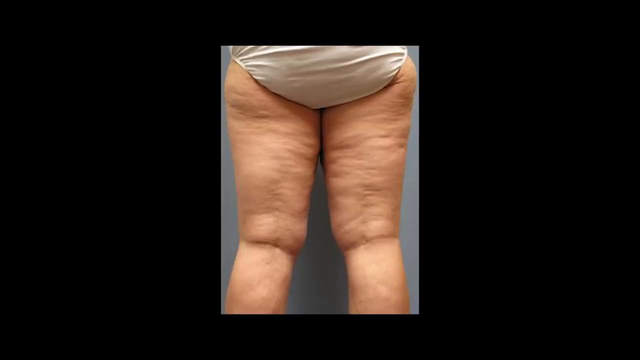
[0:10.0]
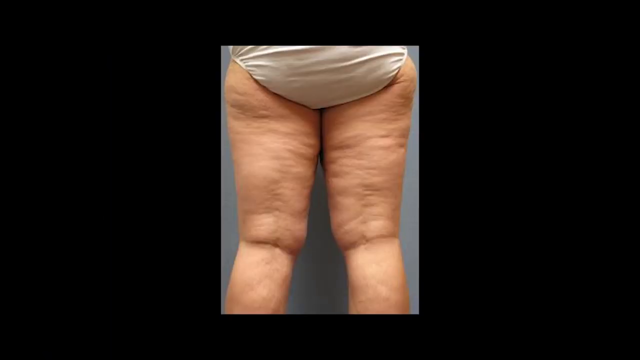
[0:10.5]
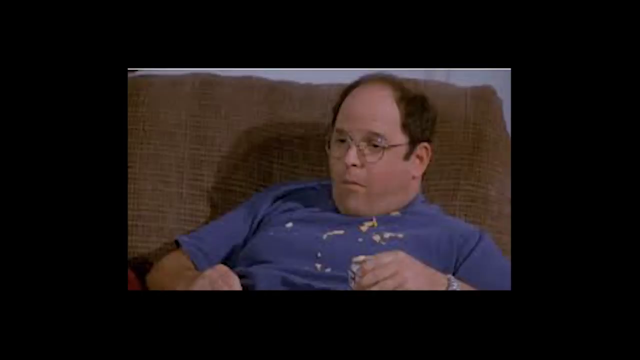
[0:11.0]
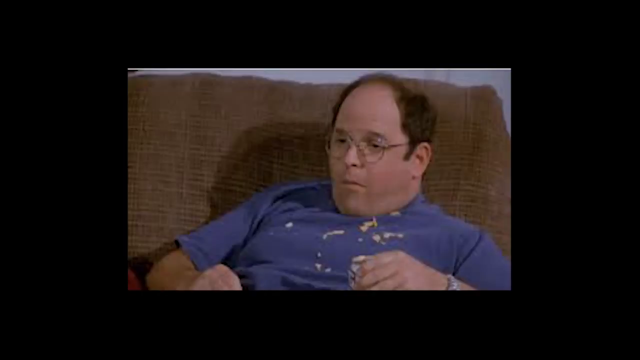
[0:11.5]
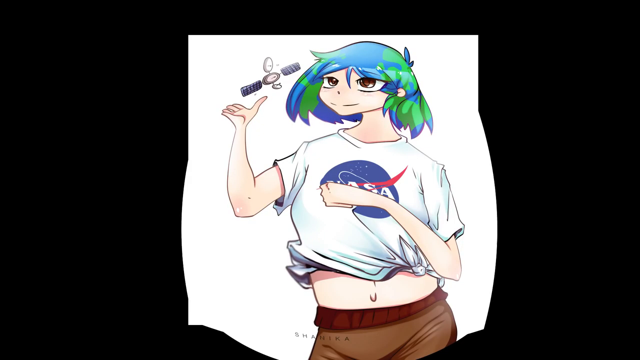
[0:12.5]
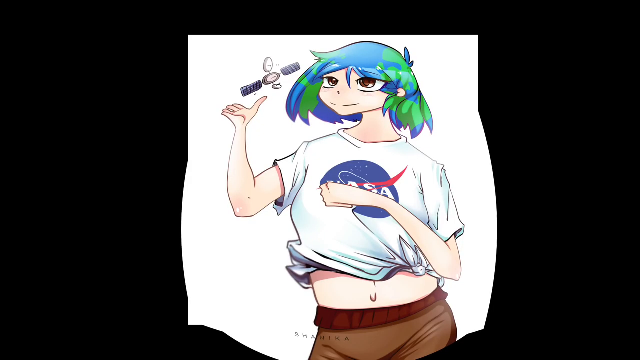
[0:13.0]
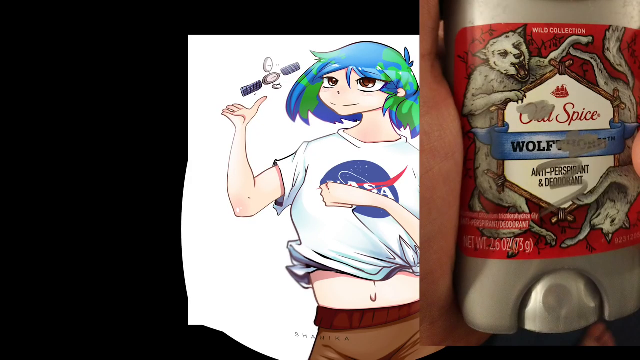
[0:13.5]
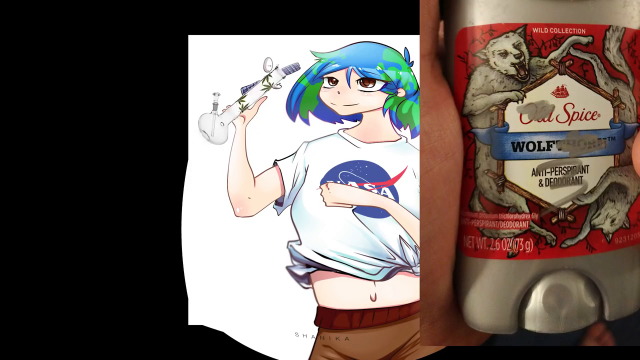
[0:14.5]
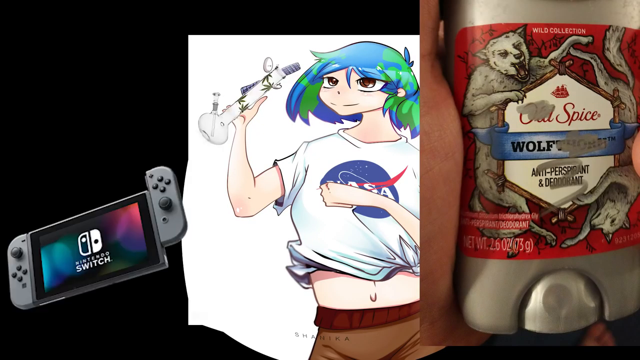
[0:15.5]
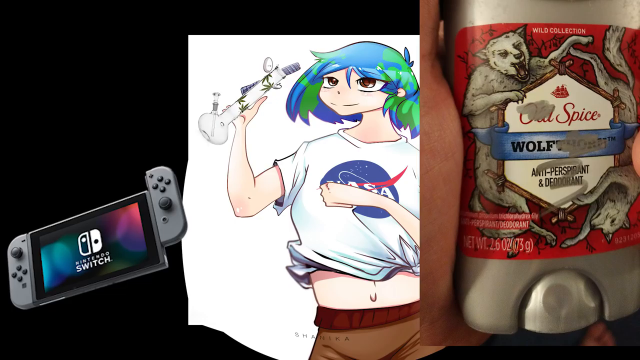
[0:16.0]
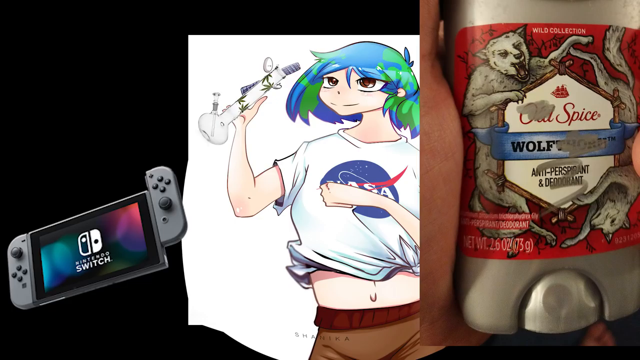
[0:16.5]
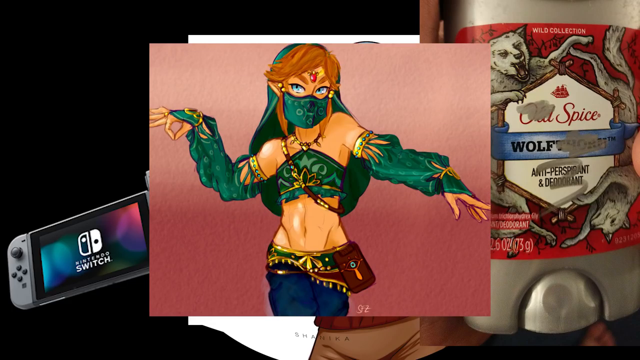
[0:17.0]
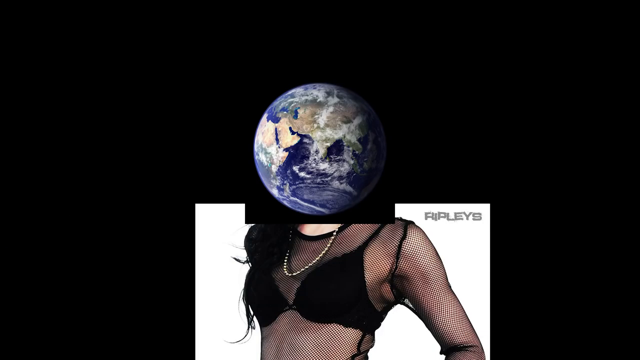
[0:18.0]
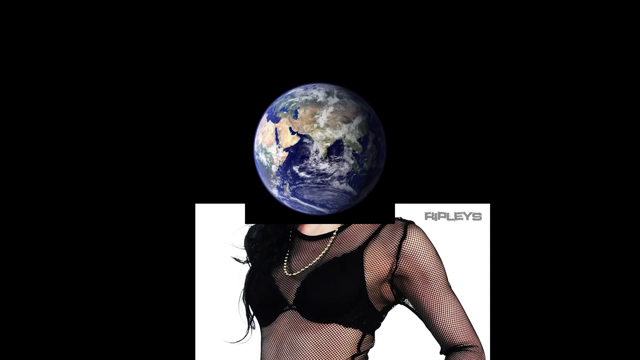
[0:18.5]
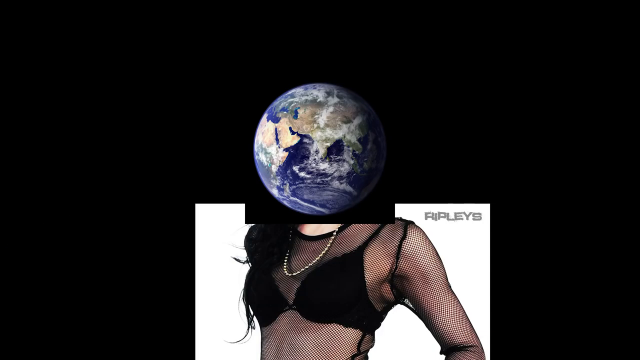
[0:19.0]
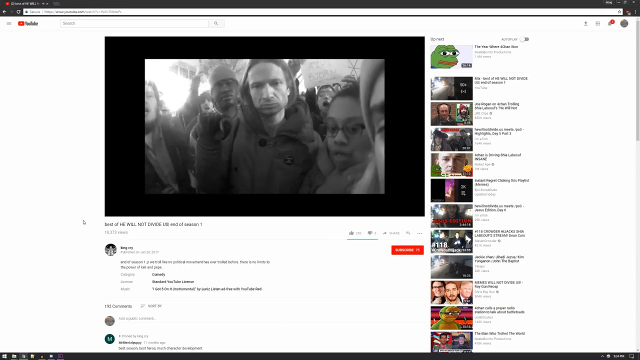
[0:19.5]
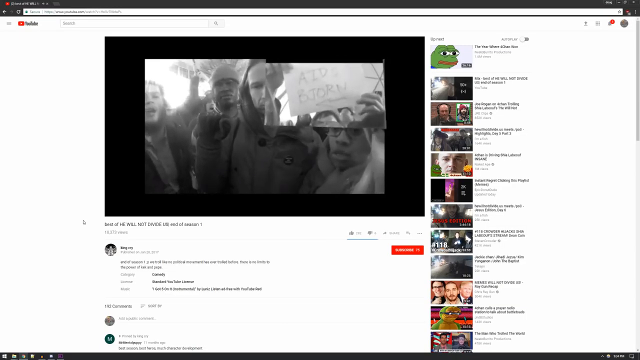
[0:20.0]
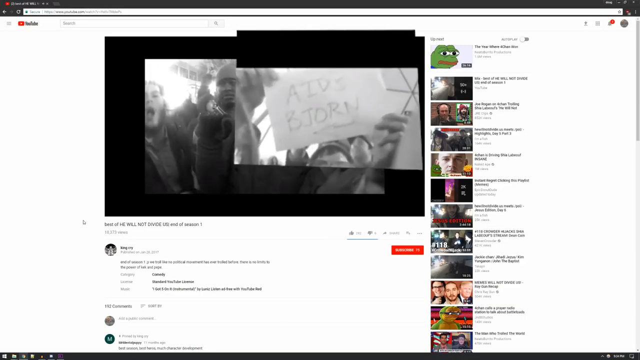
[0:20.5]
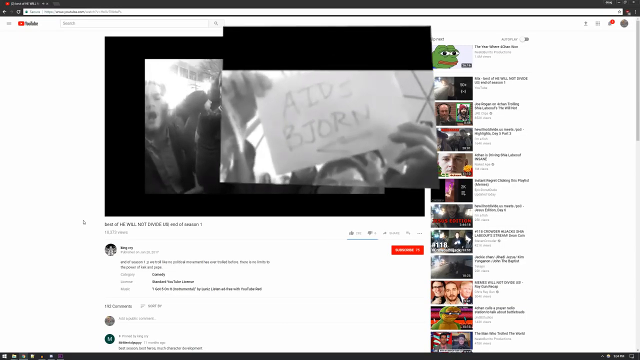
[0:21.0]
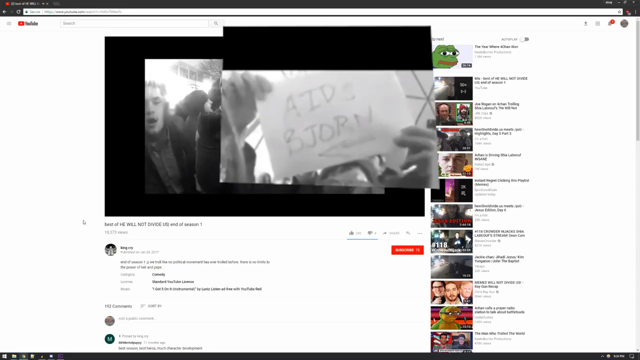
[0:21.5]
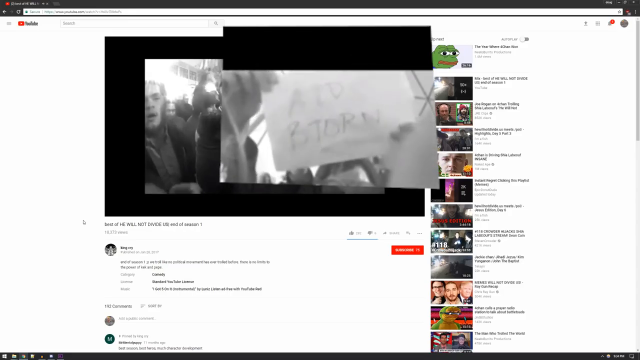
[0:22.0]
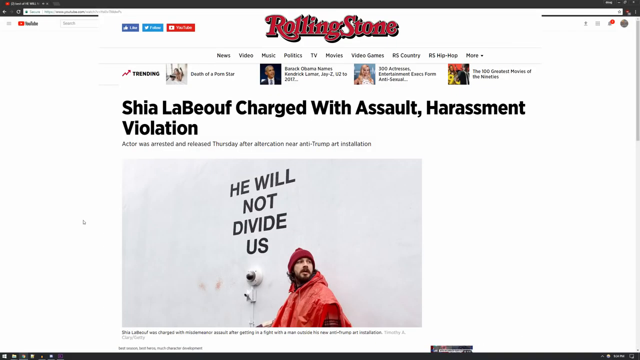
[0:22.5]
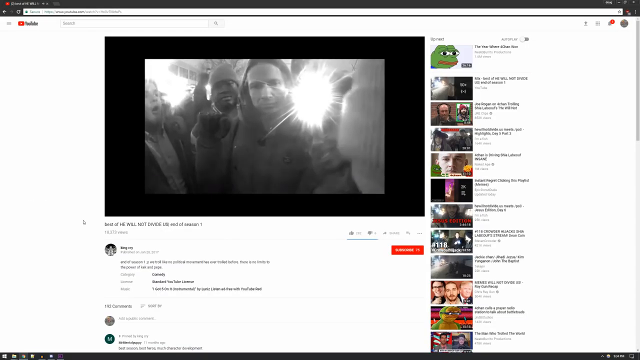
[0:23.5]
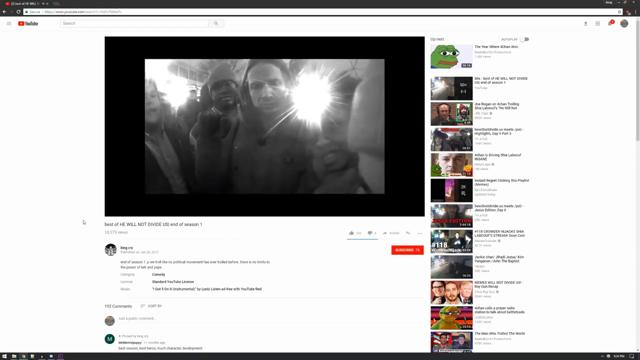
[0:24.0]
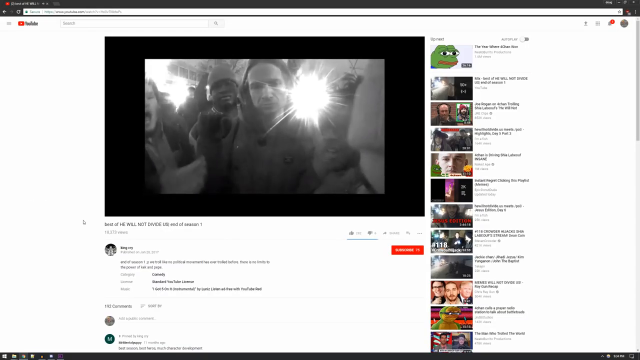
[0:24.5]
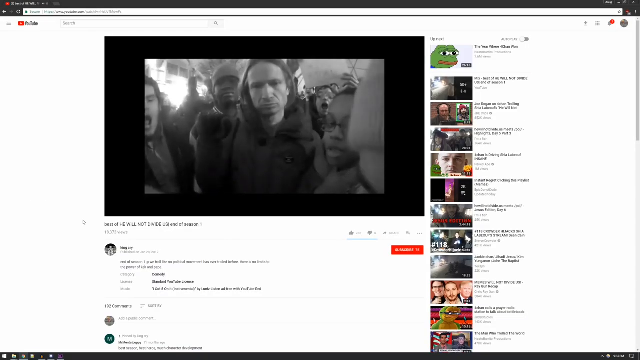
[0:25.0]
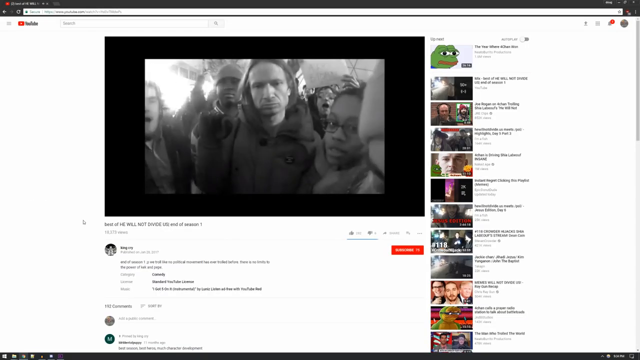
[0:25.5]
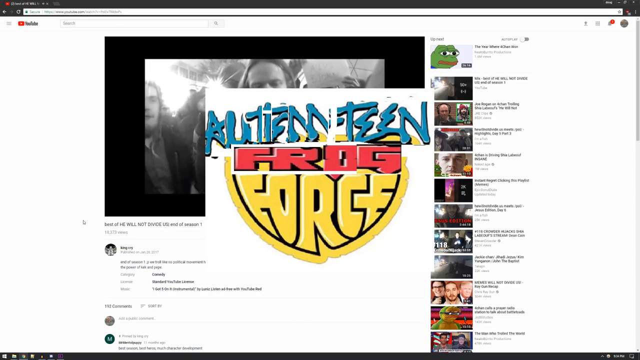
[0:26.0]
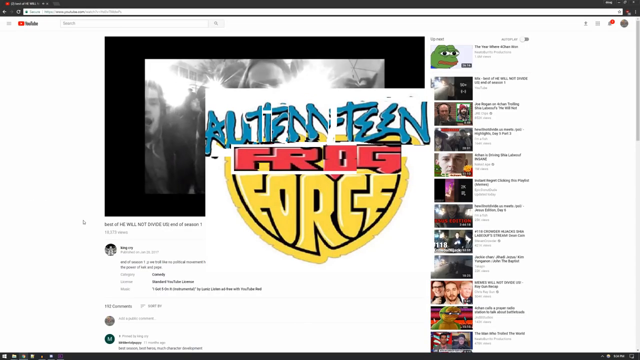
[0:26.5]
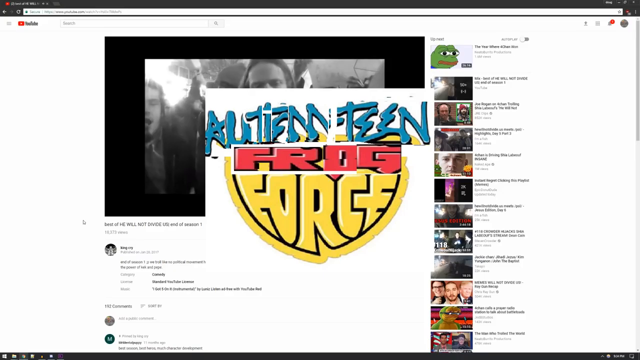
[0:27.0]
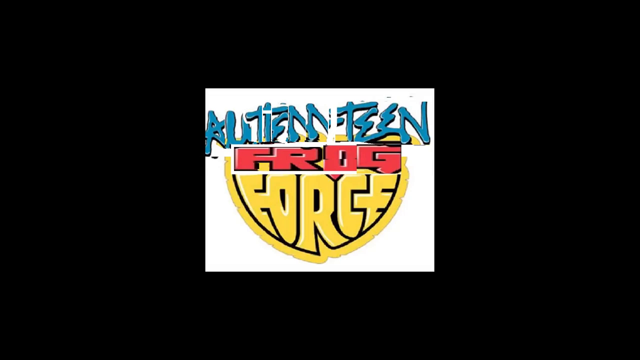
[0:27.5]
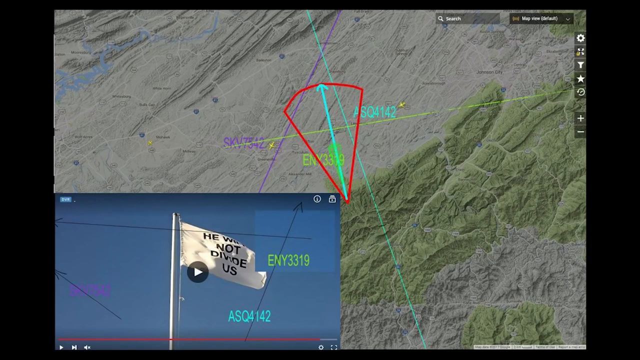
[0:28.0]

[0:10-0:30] A woman's legs are shown from behind, and then George Costanza from Seinfeld appears, watching something and making a really funny face. A cartoon character with blue and green hair looks like she is holding up something that would contain pot. A model appears with the world at the top of her head, along with Rolling Stone magazine. A black and white video plays on a website; it says "AIDS" and is an AIDS story. Among the various clips is an Old Spice label that looks very old. A map has a red drawing on it: an arrow that goes down with two sides and a puffy top. A switch for a controller is shown. Varying clips keep zooming in and out and popping up. Text reads "fringe force", and a yellow, eye-catching label pops up in the middle.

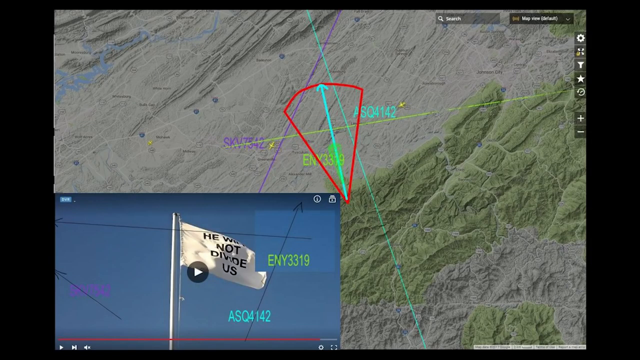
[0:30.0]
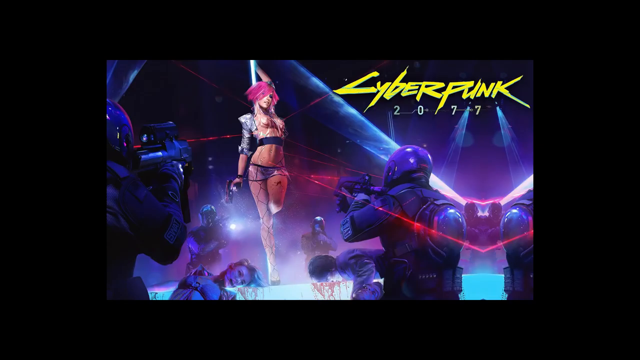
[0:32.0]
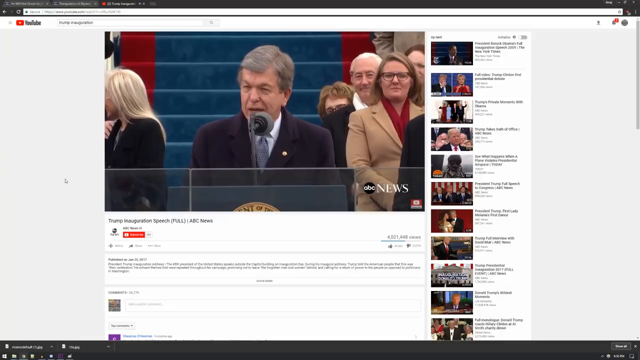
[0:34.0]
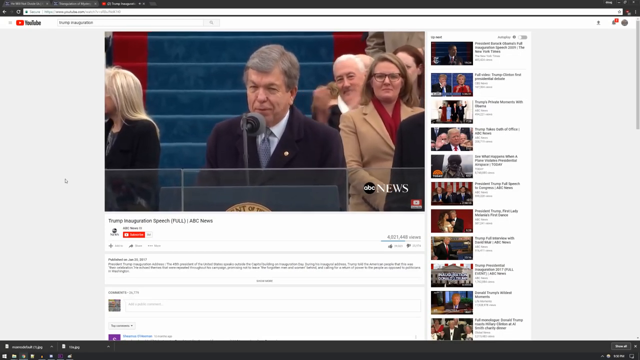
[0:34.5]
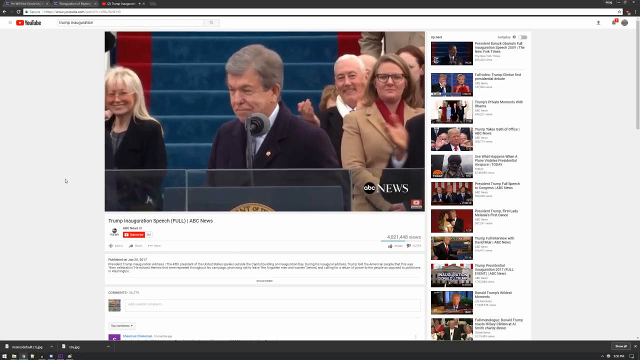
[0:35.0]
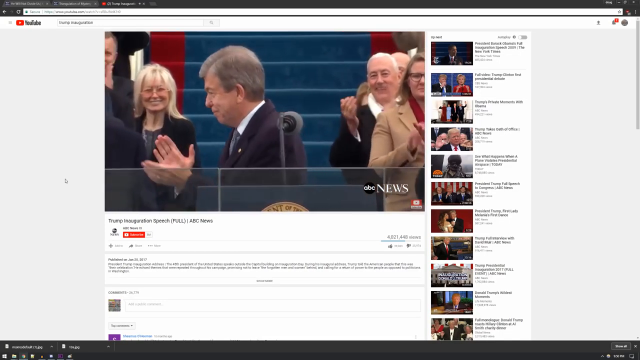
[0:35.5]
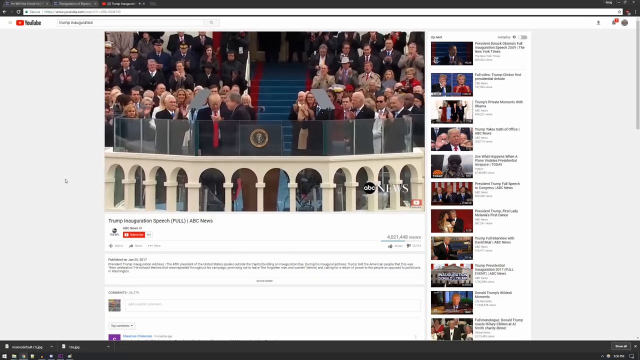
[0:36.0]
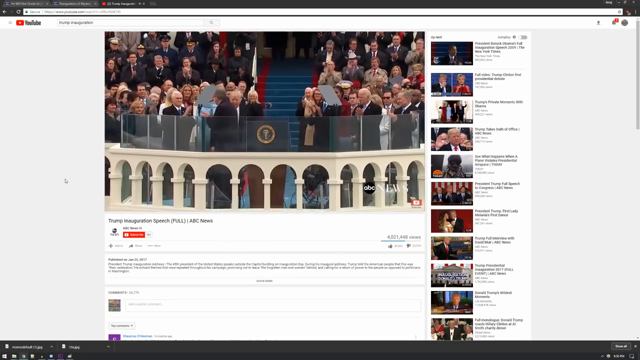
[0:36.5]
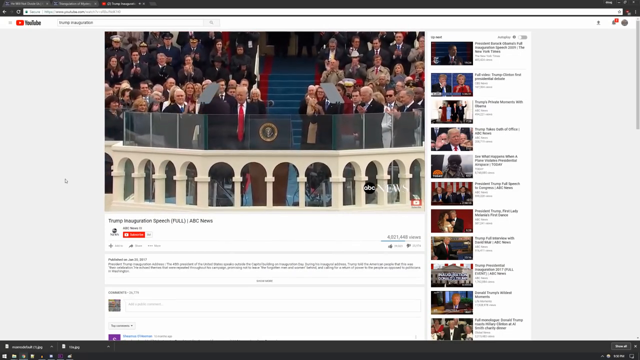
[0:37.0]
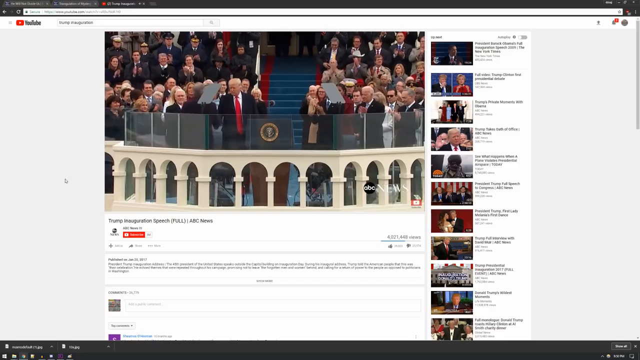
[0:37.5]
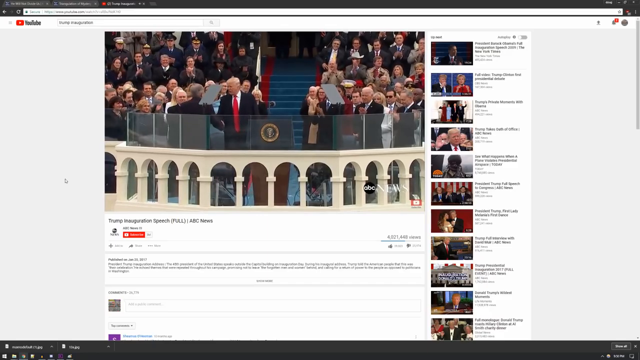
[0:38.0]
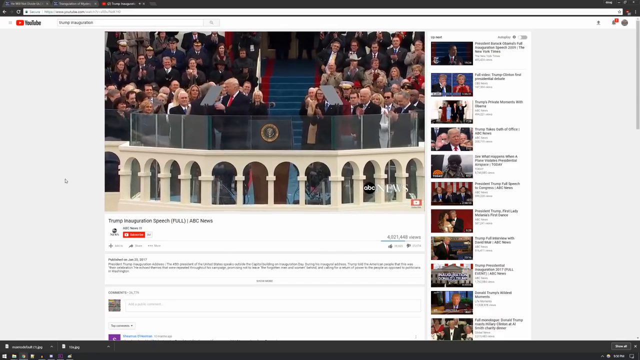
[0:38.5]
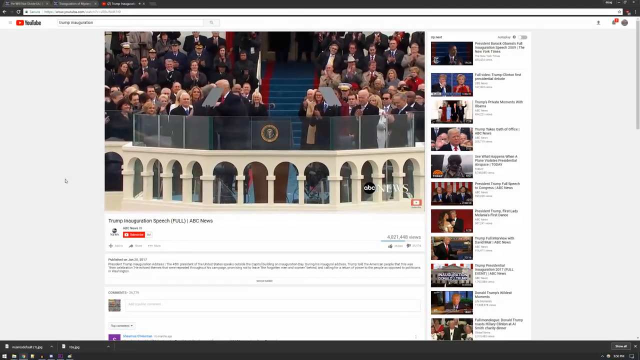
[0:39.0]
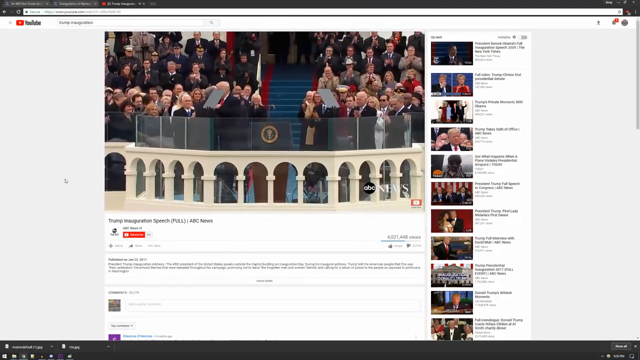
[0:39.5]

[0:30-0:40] A white flag with black writing on it appears, followed by a map. Clips show people speaking at Trump's inauguration, and the people are clapping. A map shows a target outlined in red with a blue arrow running through the middle of the marking. A cartoon girl, Cyber Pink, flashes on screen. The map appears again, with different codes on it and no location labeled with a readable name. A small box contains the white flag and seems to have an arrow that can be clicked to watch a video, with green numbers and letters near the flag. The Cyber Pink image shows a number that apparently reads 2027. Everyone at the inauguration is clapping for Trump.